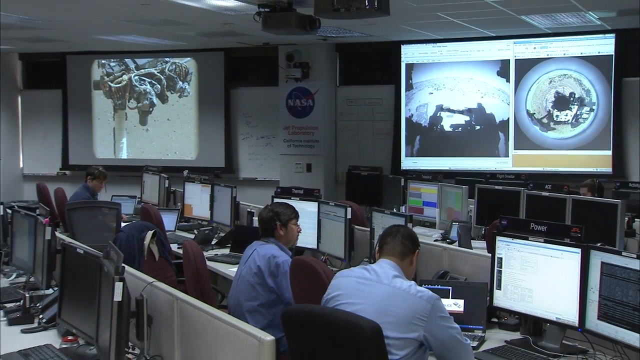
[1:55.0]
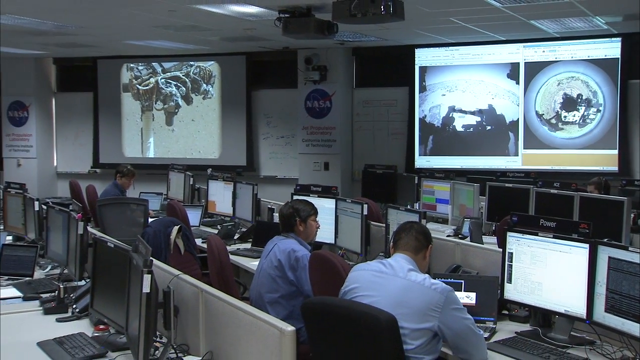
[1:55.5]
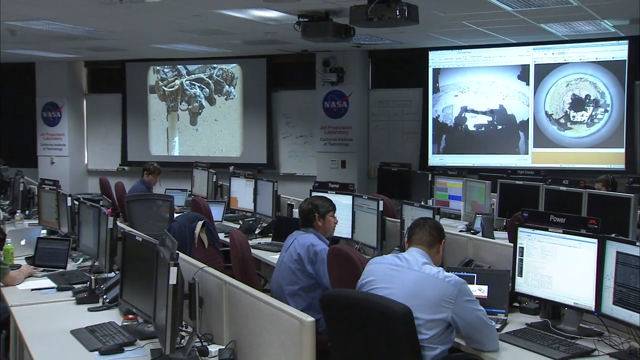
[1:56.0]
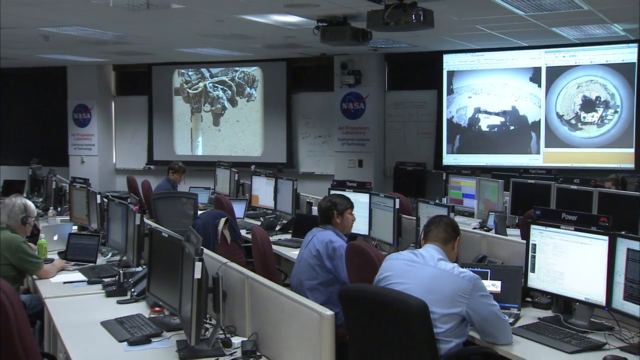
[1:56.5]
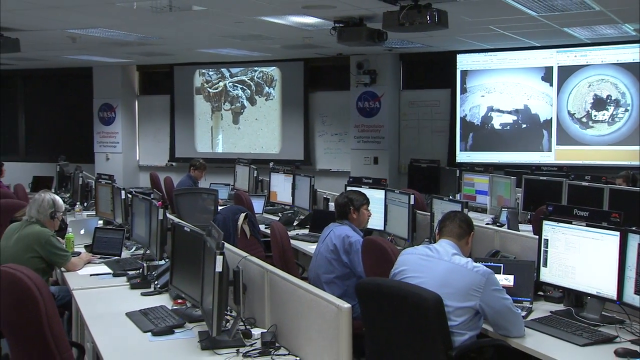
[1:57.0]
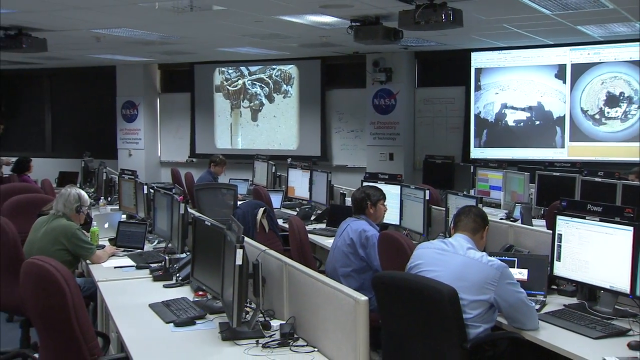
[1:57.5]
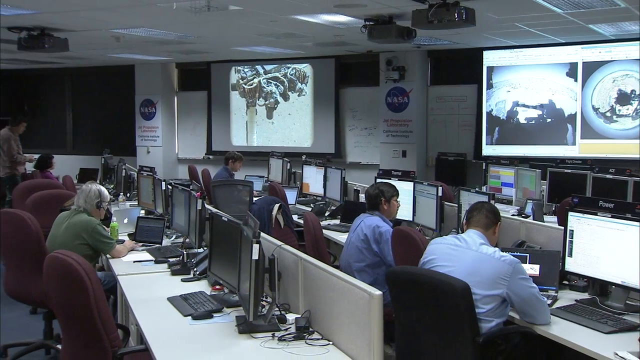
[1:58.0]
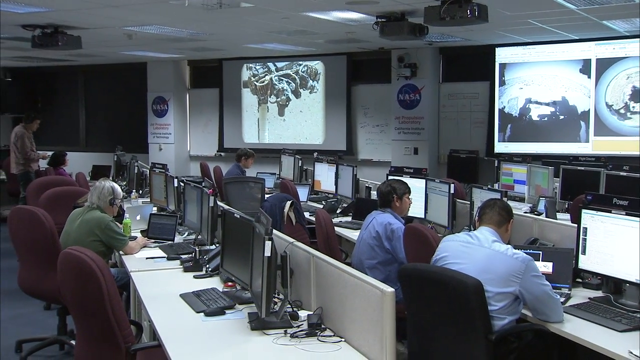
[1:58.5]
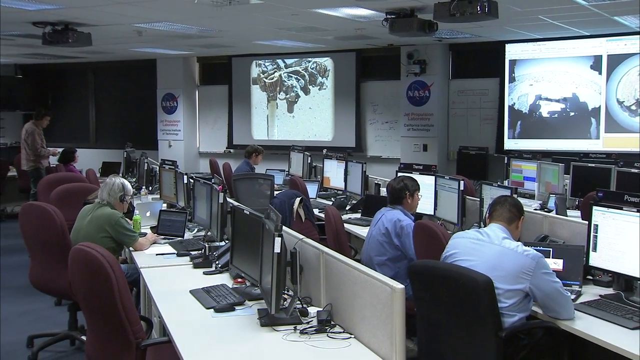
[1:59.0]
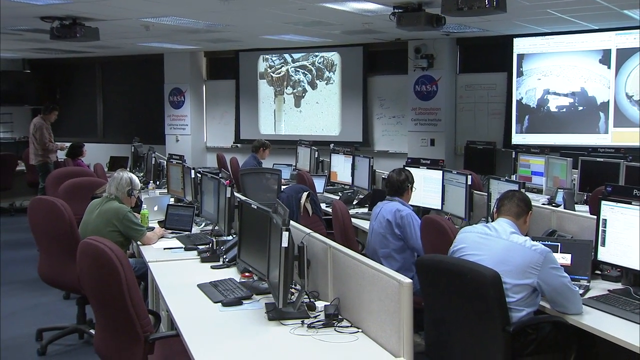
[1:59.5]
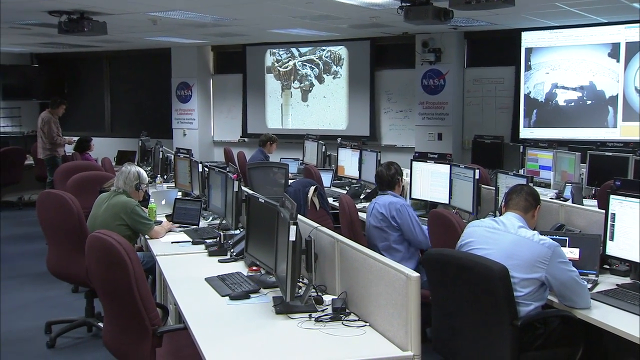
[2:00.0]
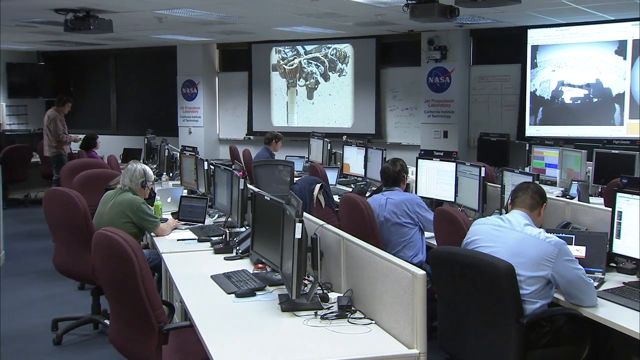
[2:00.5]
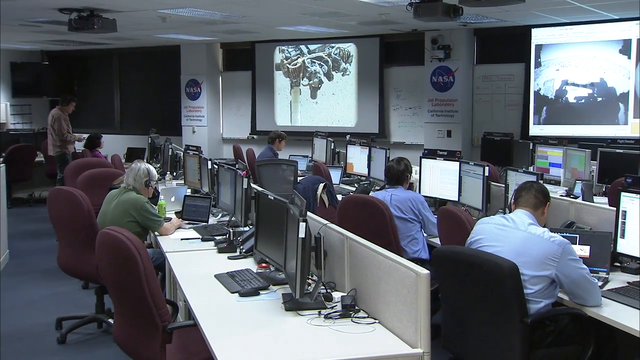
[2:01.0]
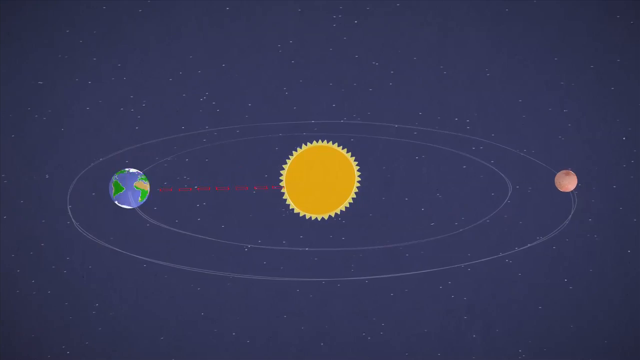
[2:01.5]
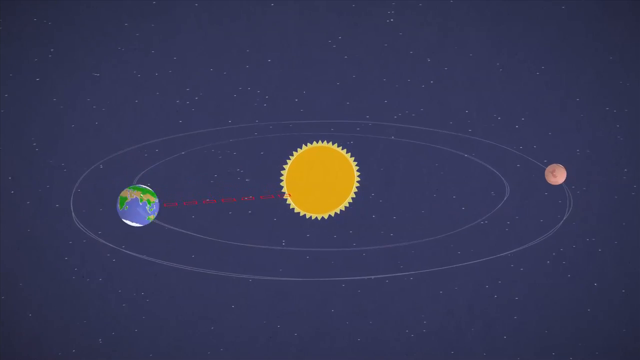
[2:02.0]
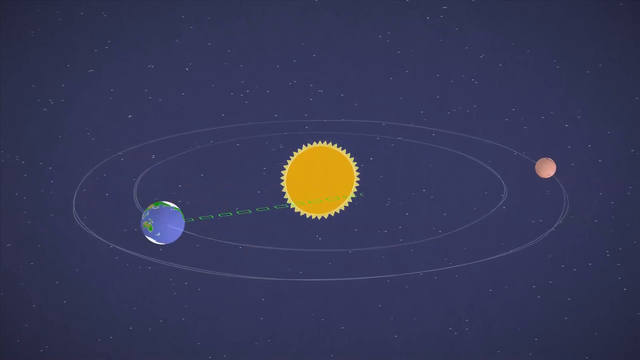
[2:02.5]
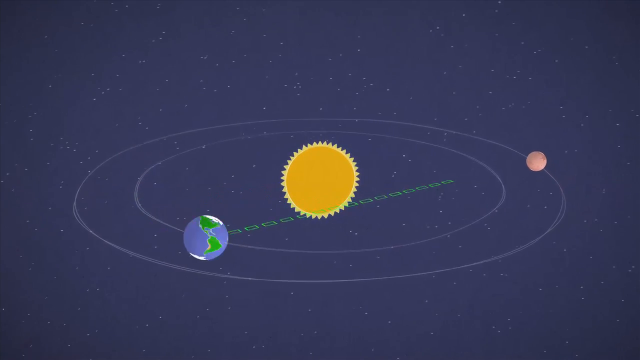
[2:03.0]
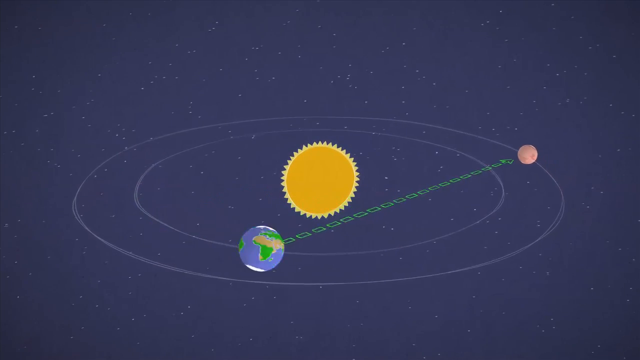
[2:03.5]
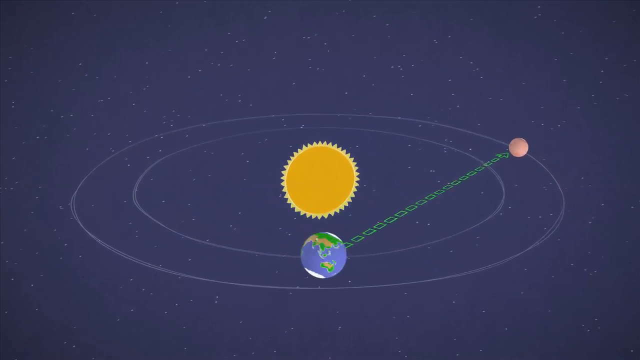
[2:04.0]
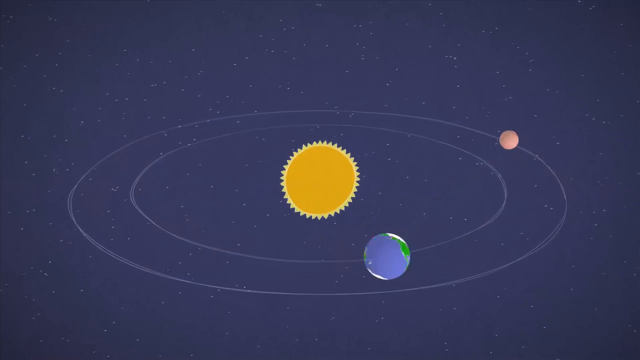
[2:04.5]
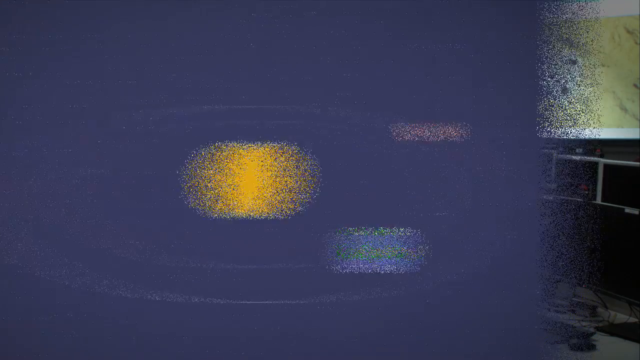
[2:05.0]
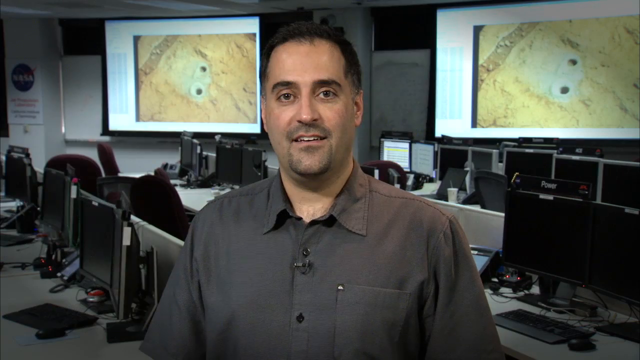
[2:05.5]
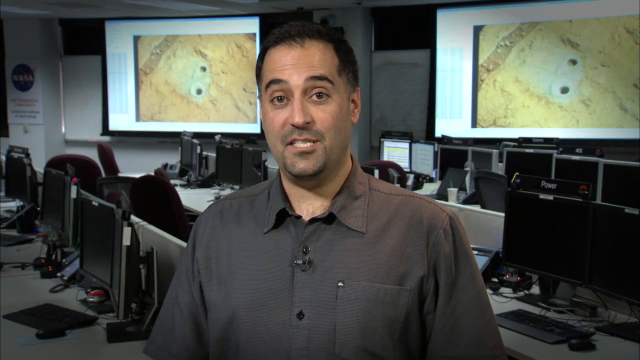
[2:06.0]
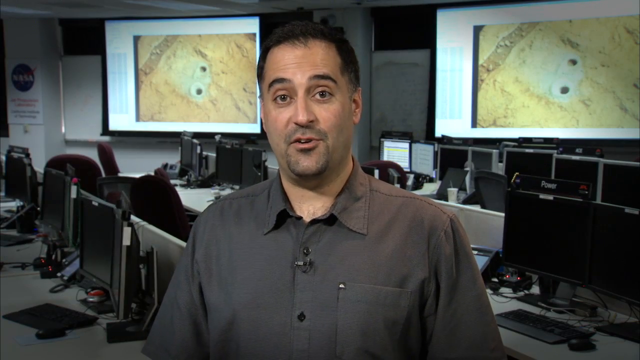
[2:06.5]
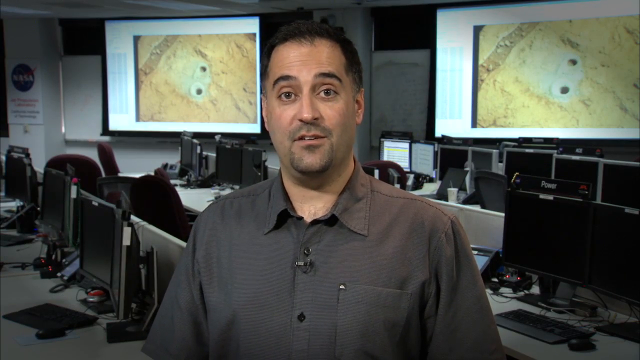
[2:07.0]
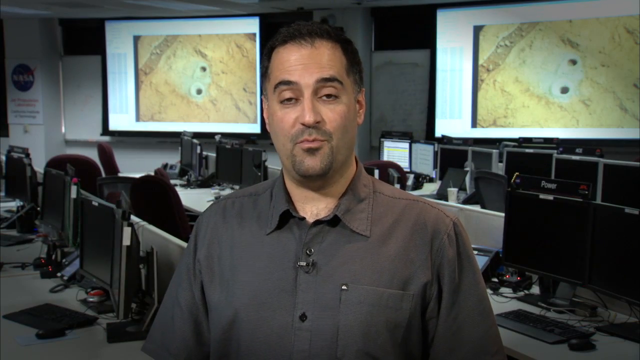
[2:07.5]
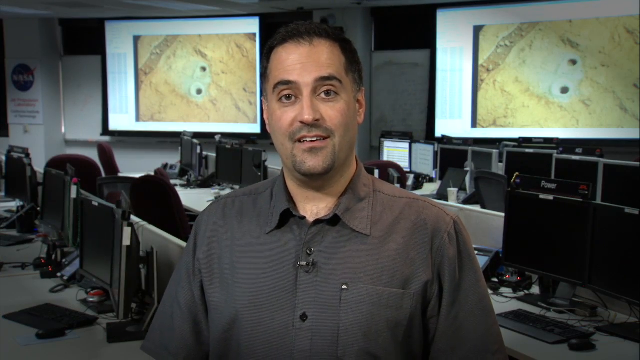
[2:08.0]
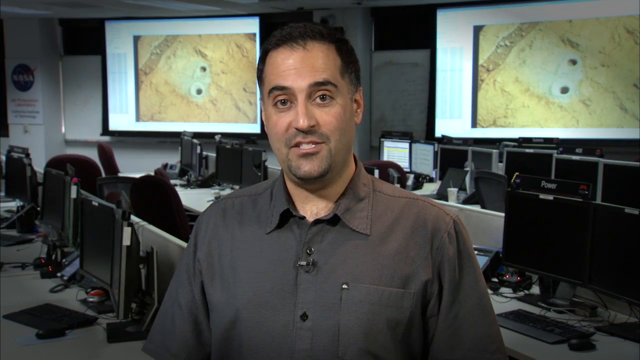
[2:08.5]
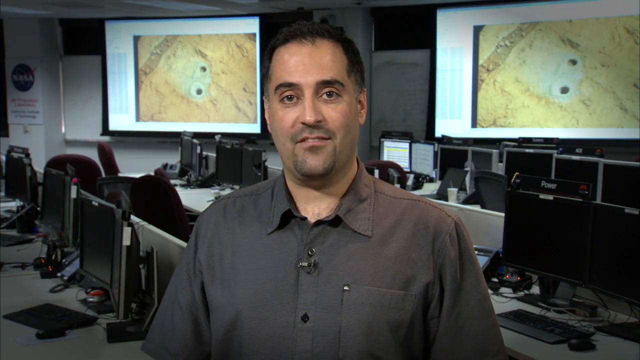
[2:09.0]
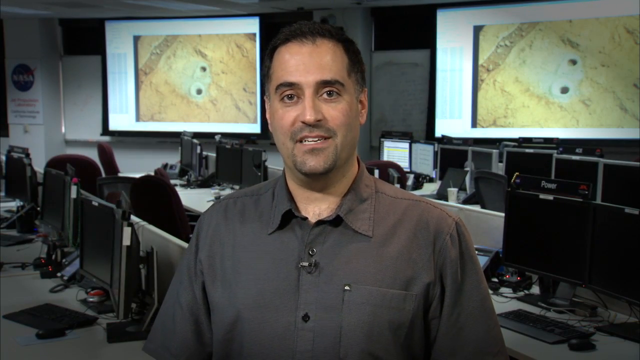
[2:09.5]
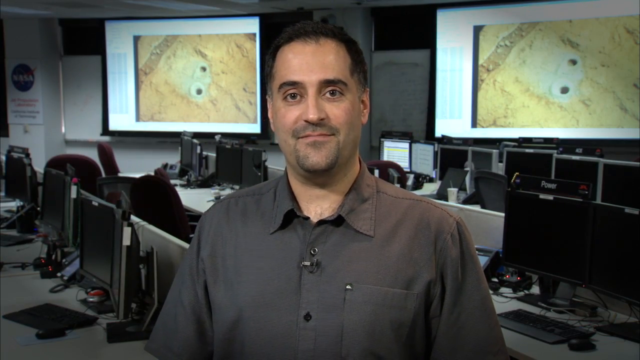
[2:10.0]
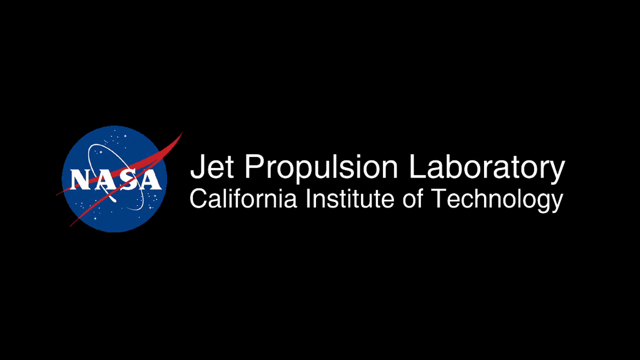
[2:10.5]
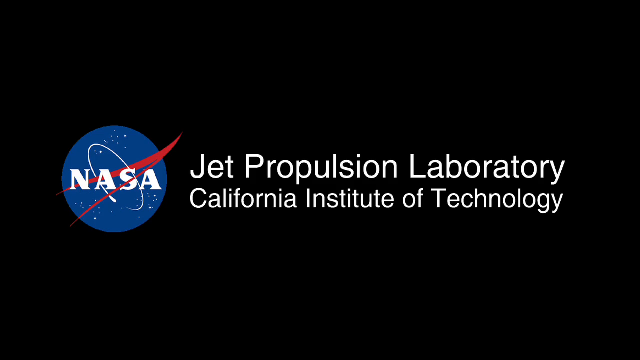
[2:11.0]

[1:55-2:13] Inside a room are a bunch of desks with computers on them and people in light blue shirts at the desks. Screens and the NASA logo are in the back, so it appears to be a NASA building. The scene pans backwards, showing more people seated in chairs at desks working at computers. The scene shifts to a cartoon of the Earth and Mars rotating around the Sun; once Mars rotates past the Sun and is near the Earth, signals are sent from the Earth to Mars. Next, a man in a brown shirt looks at the camera and talks to it, with desks, computers, screens and the NASA logo in the background, so he apparently is at NASA as well. Finally, a graphic with the NASA logo appears with the text "Jet Propulsion Laboratory California Institute of Technology."